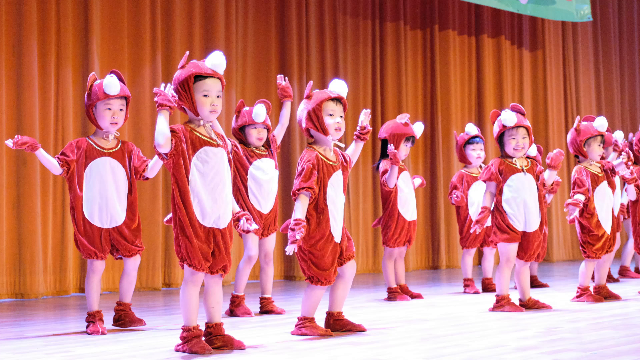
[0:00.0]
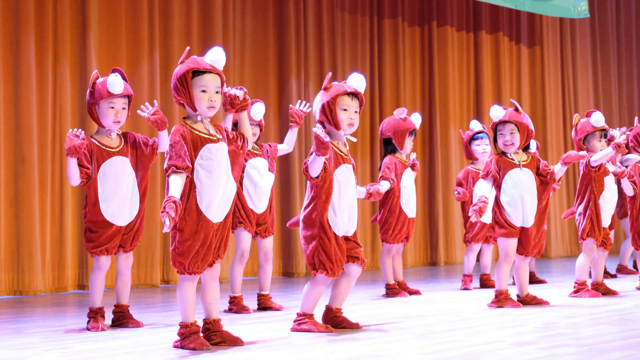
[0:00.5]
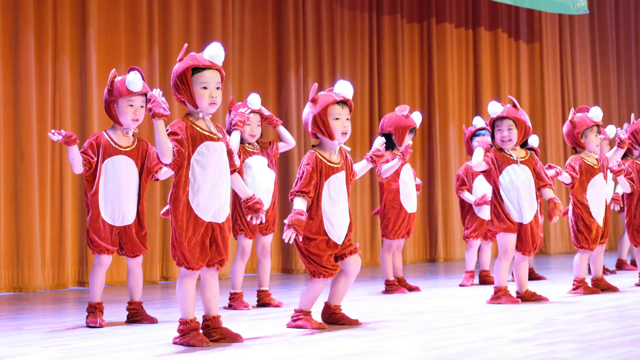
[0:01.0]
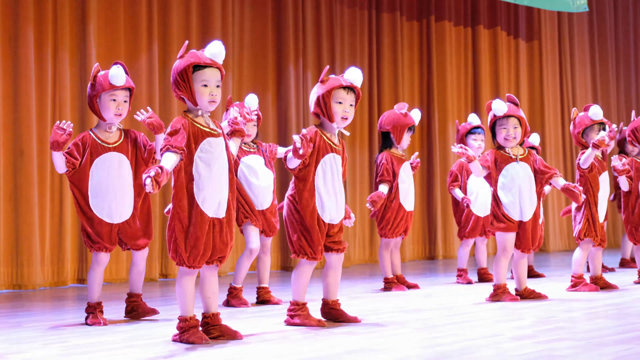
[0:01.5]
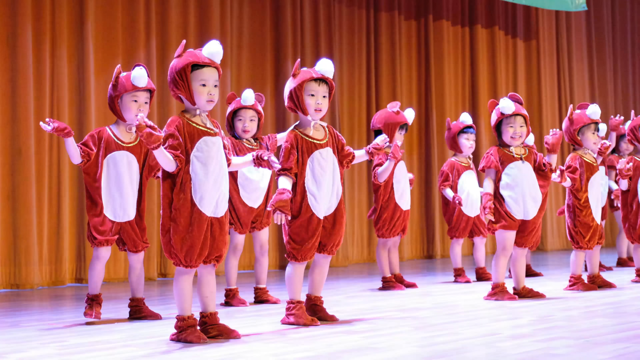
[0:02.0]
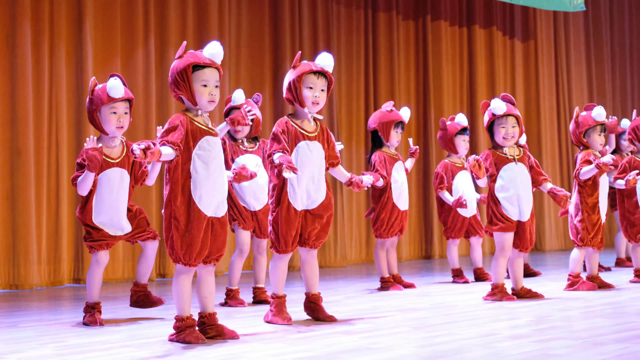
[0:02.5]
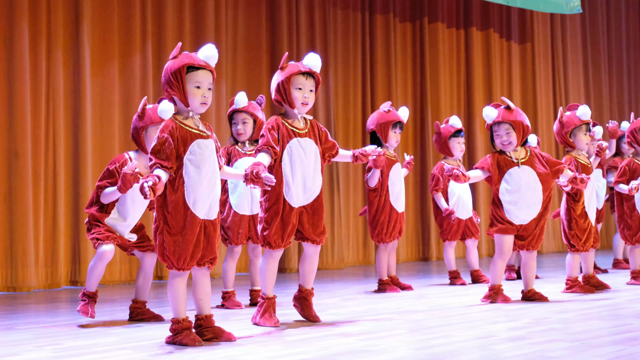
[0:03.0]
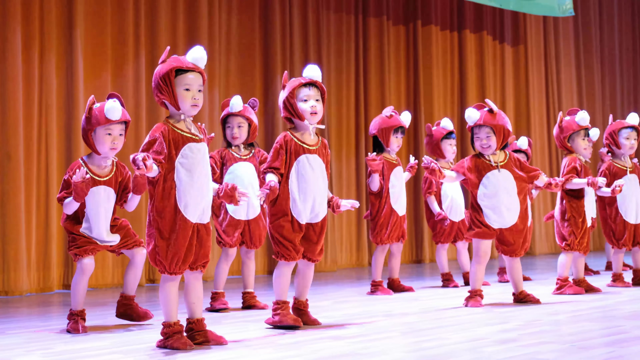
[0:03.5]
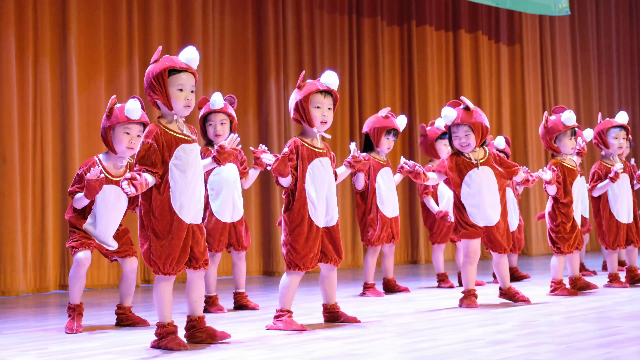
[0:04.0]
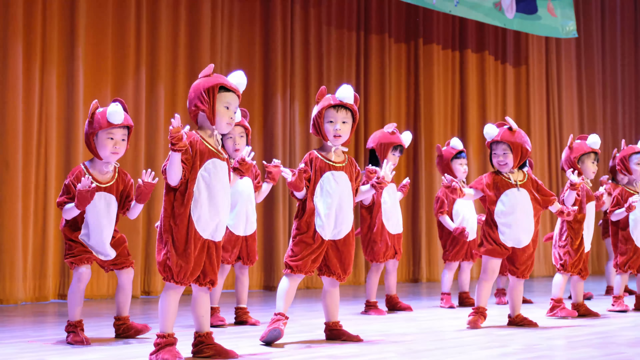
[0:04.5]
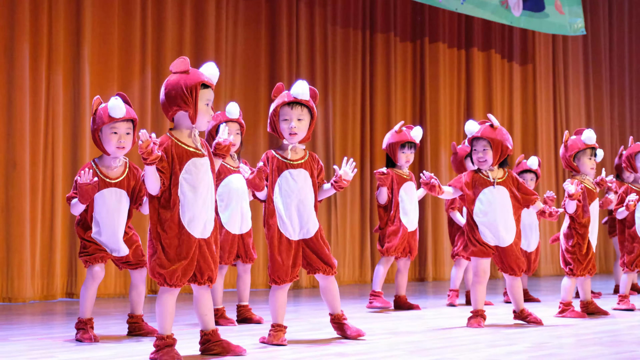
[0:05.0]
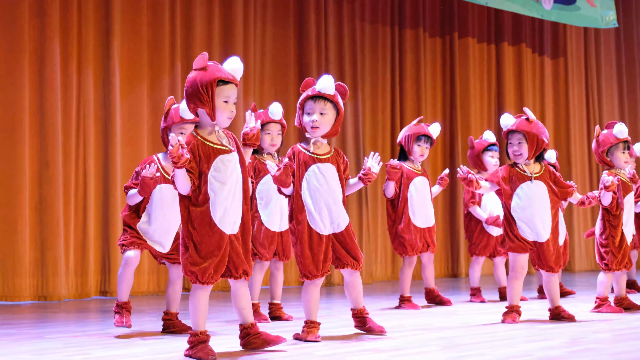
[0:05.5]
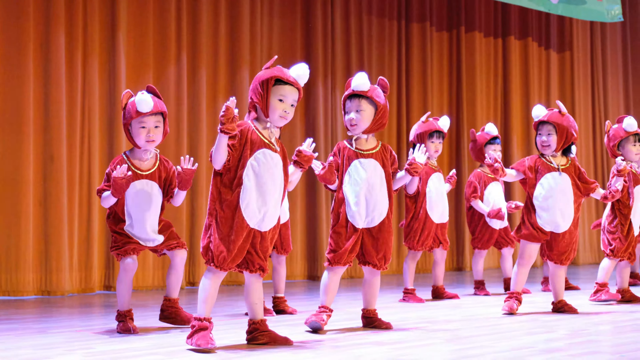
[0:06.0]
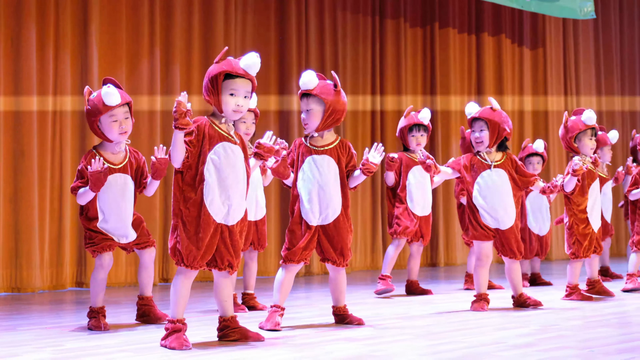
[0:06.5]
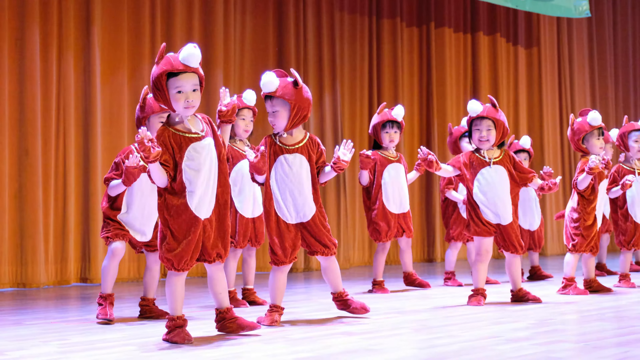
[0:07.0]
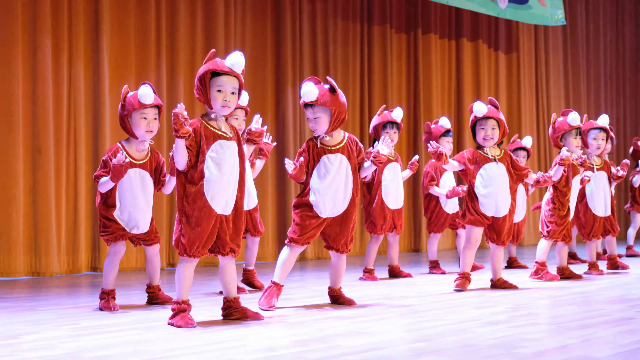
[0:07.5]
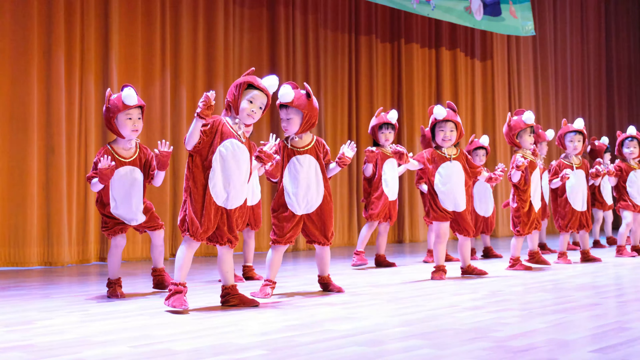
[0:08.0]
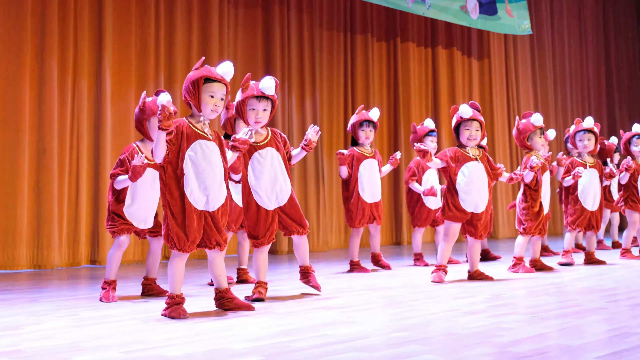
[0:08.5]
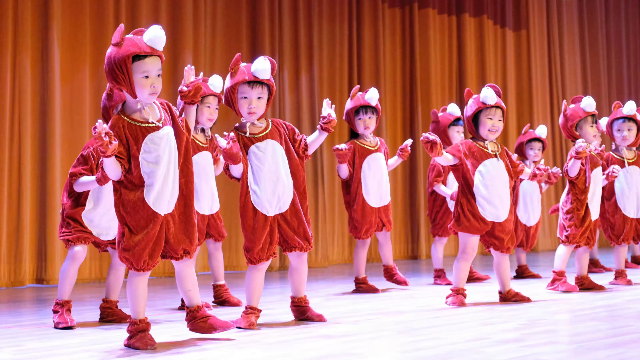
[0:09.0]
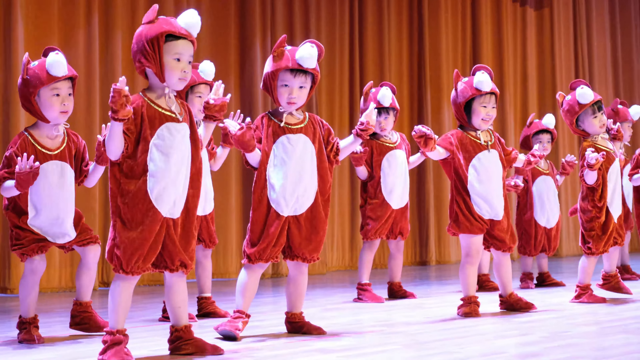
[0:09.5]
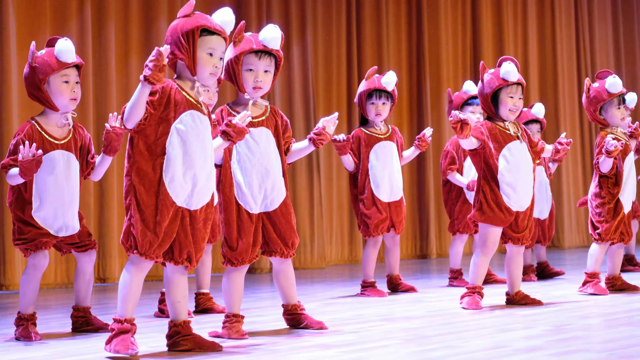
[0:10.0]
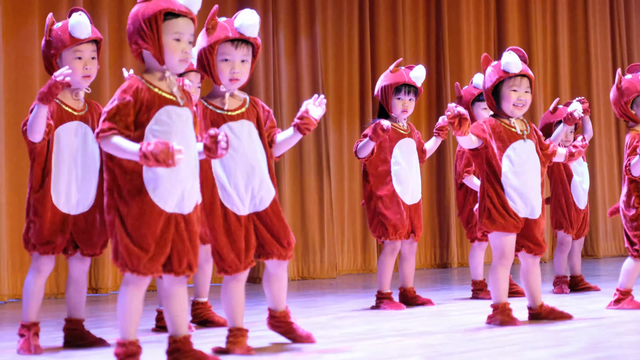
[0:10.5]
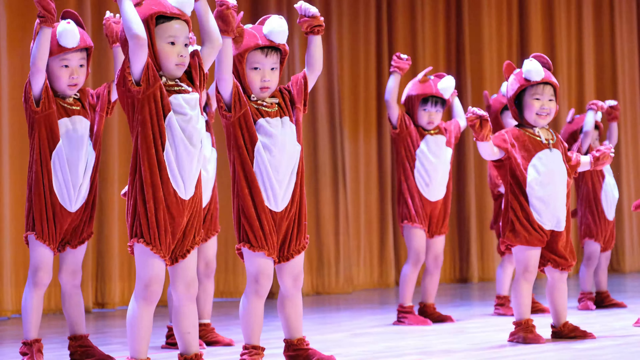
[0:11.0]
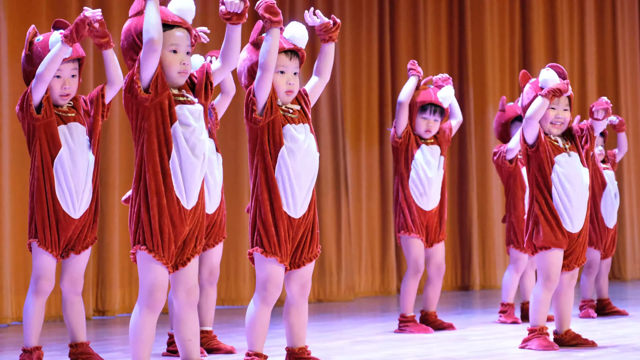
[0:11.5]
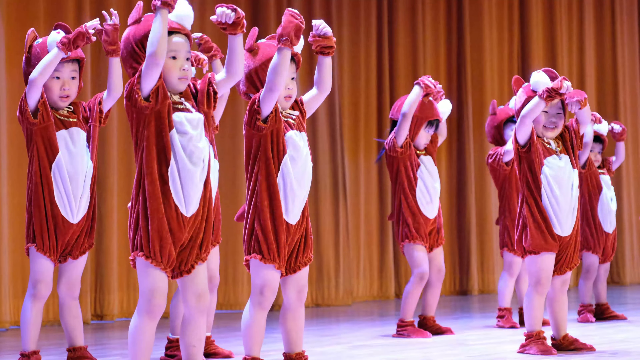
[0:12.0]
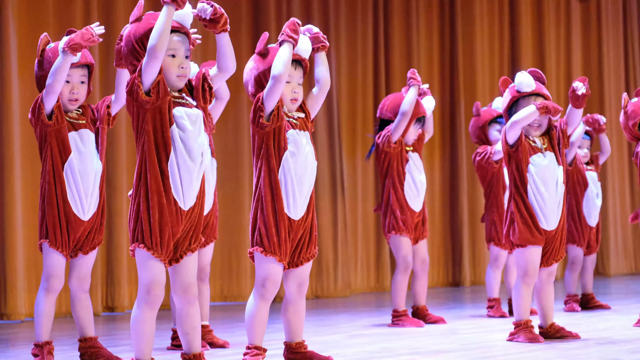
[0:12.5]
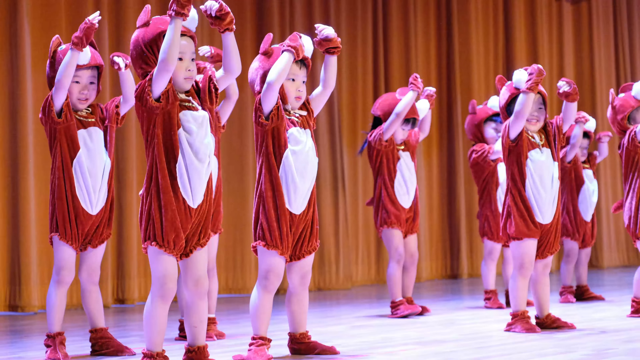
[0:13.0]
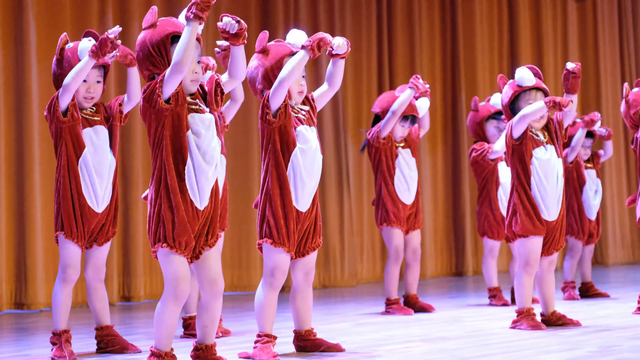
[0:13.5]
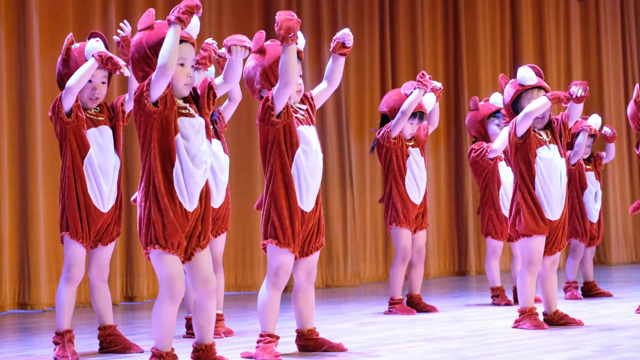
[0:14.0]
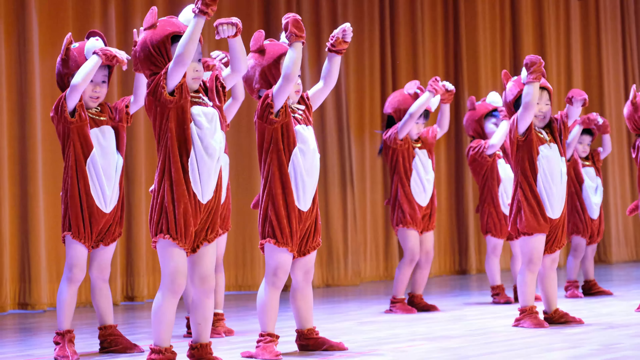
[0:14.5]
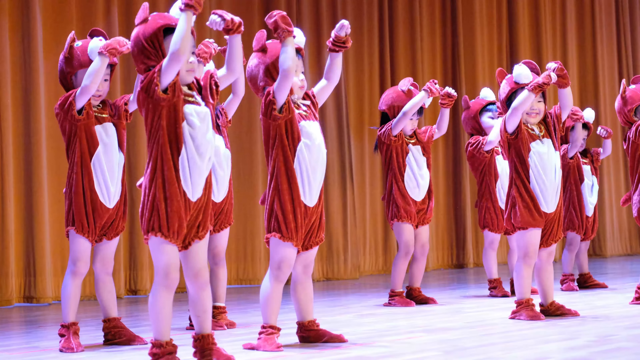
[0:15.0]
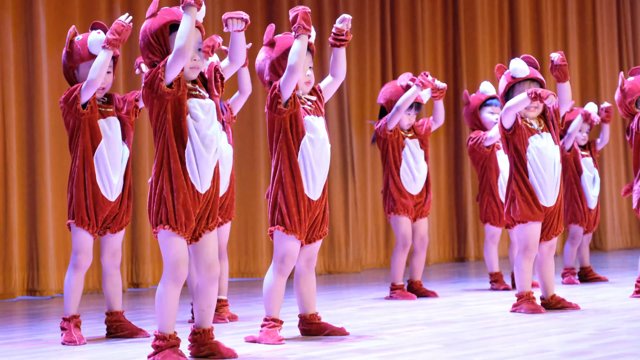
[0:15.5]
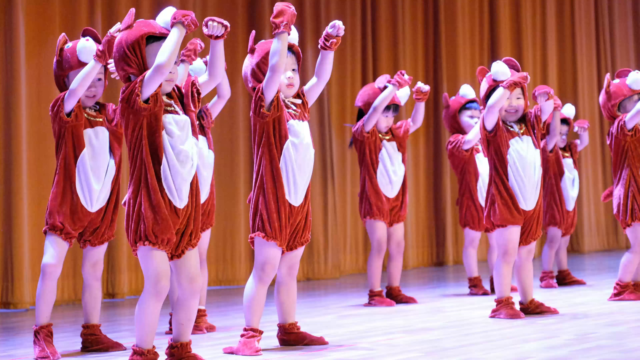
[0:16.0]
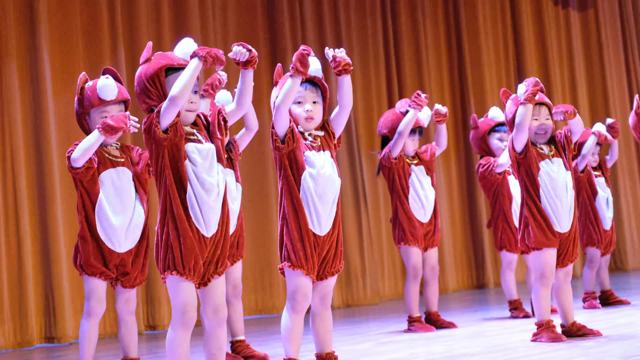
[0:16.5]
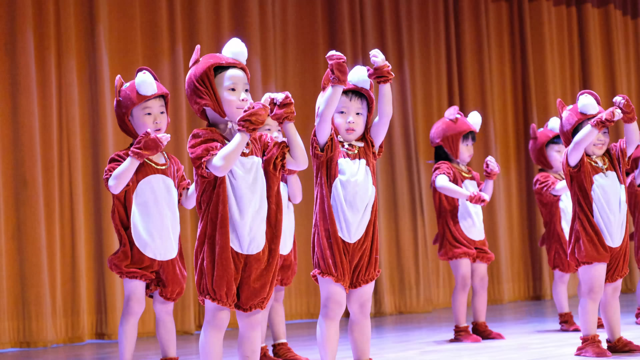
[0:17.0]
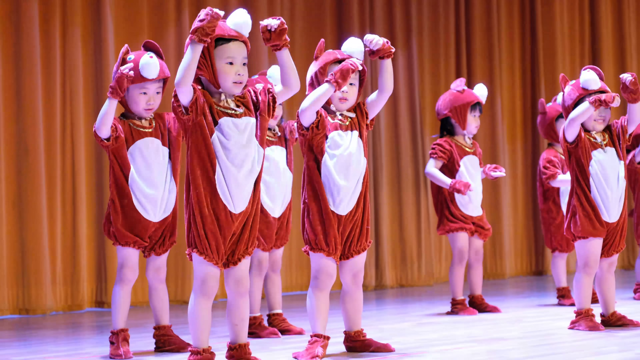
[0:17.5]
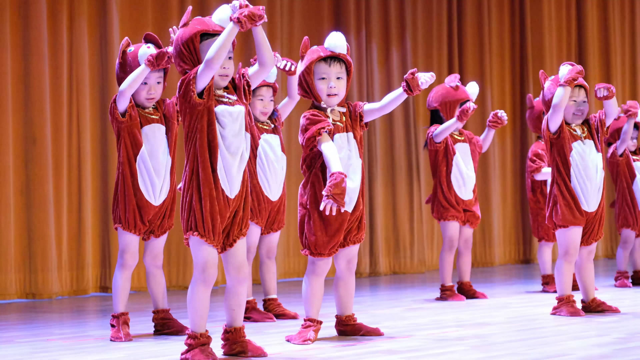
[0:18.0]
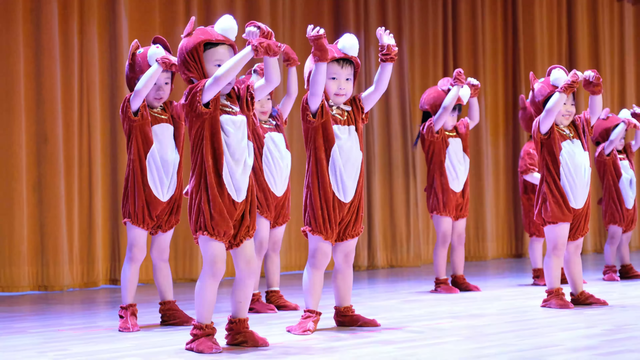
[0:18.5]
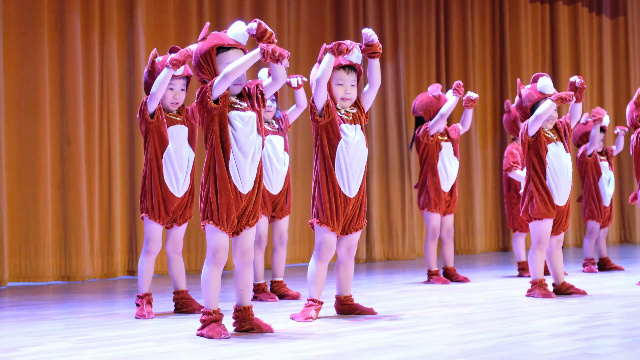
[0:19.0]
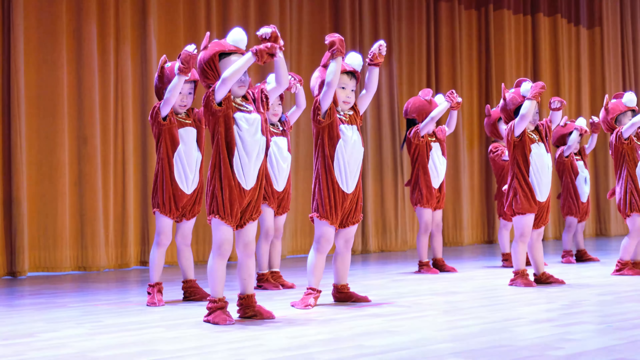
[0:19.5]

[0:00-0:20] Many kids, possibly of Asian or Japanese descent, are on a stage wearing red and white dinosaur suits and red socks. They dance a lot, apparently swaying side to side, and wave their hands above their heads, seemingly having a lot of fun. The person filming is probably one of the parents, and it appears to be a school play with dancing and dress-up, with an audience of parents and presumably teachers watching.